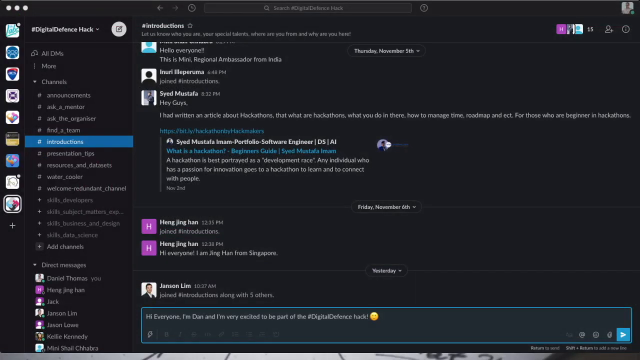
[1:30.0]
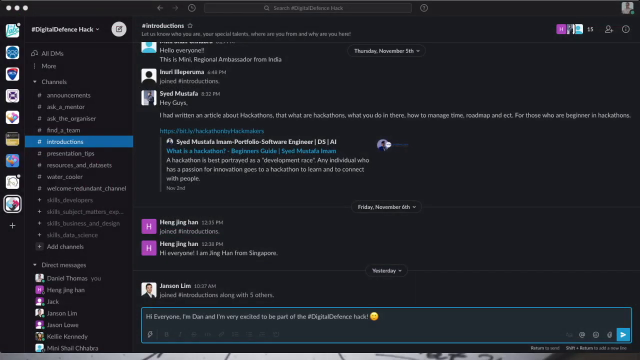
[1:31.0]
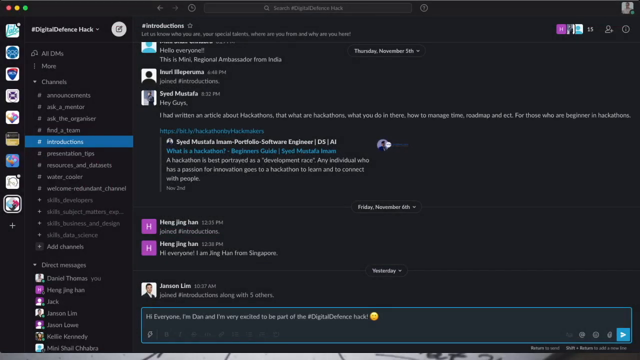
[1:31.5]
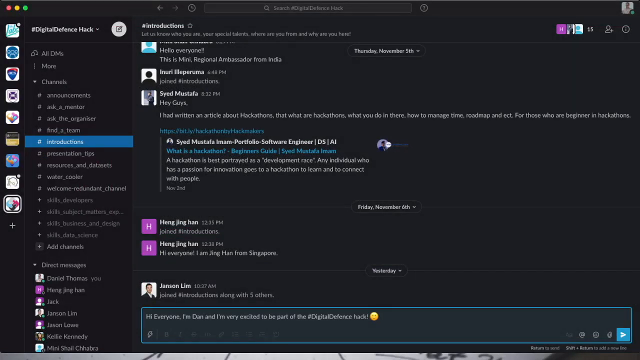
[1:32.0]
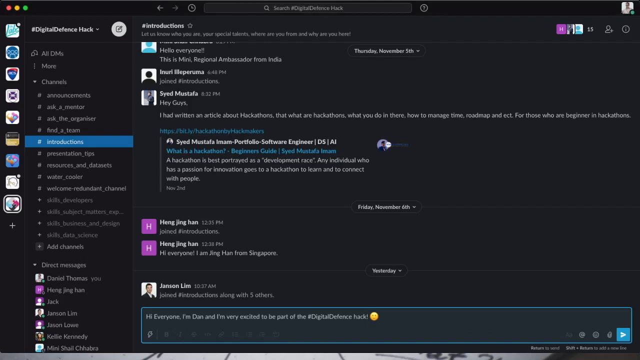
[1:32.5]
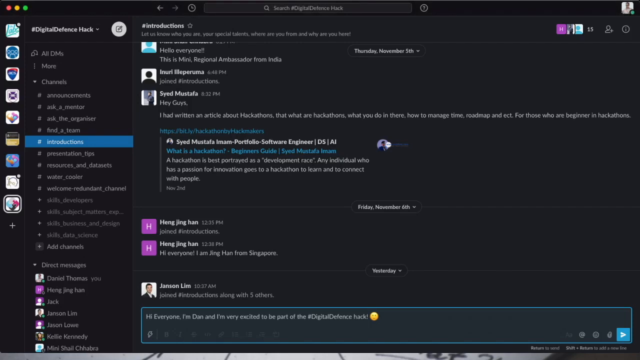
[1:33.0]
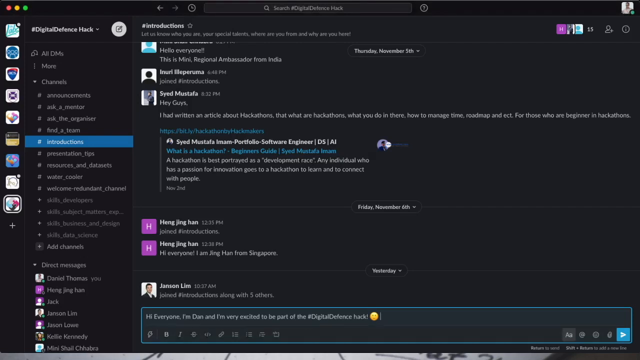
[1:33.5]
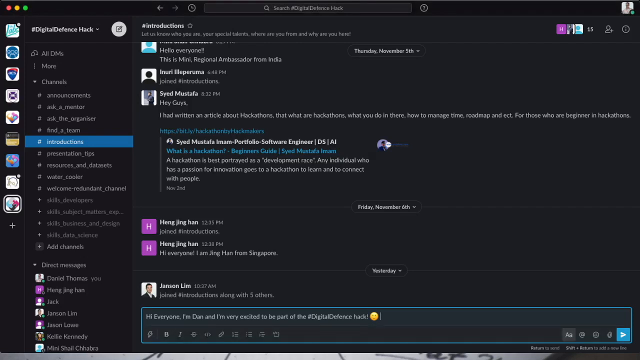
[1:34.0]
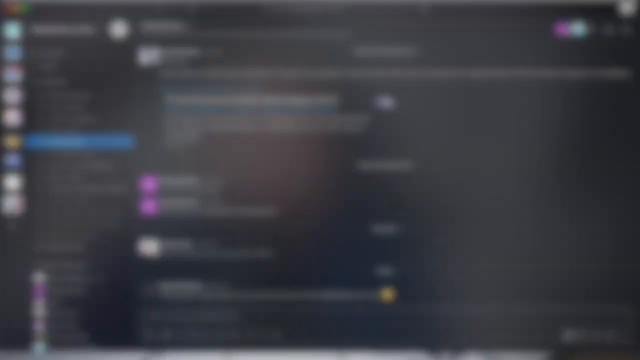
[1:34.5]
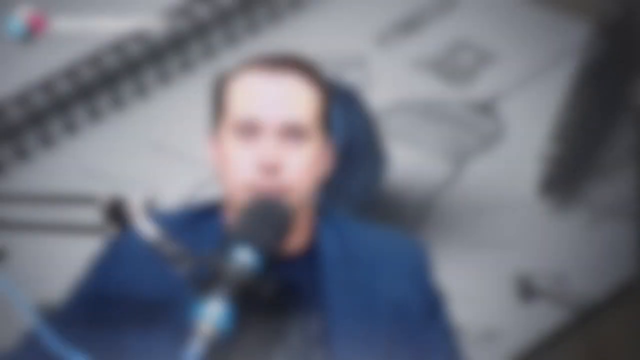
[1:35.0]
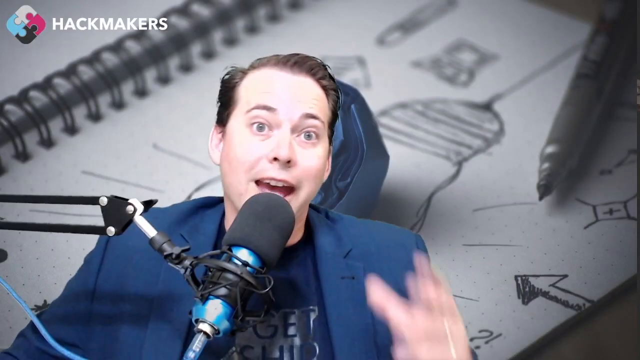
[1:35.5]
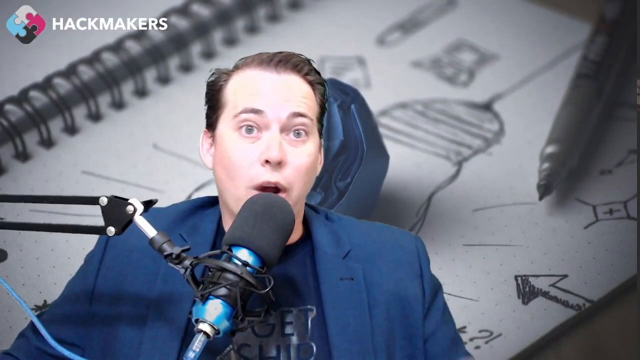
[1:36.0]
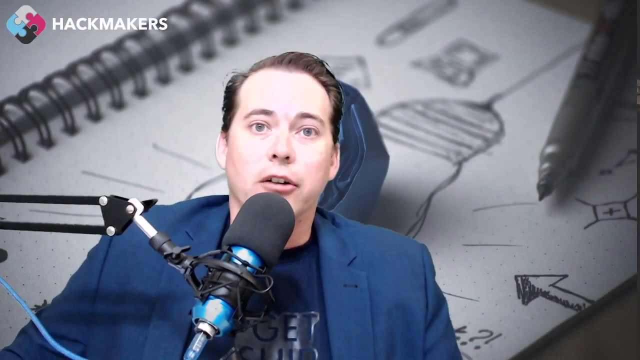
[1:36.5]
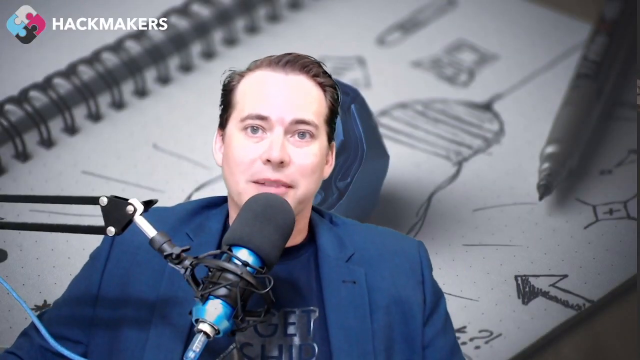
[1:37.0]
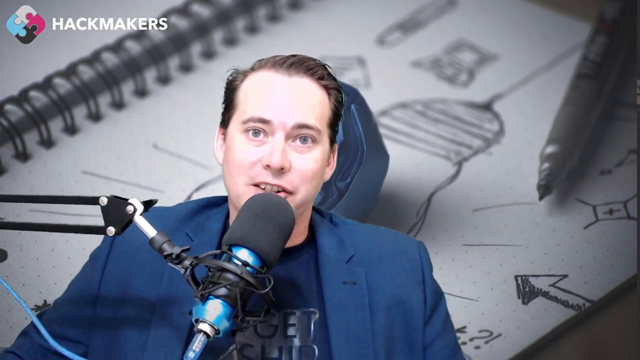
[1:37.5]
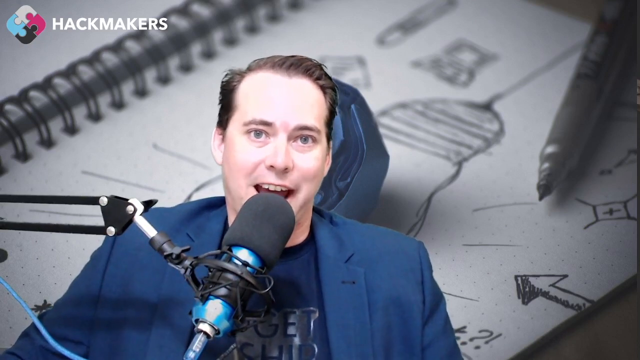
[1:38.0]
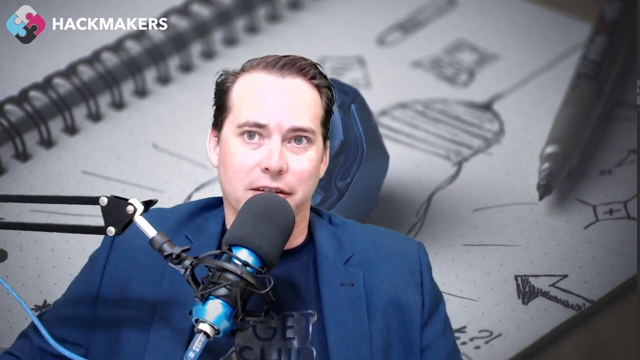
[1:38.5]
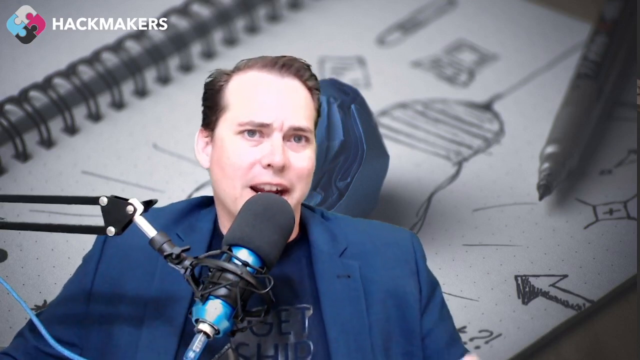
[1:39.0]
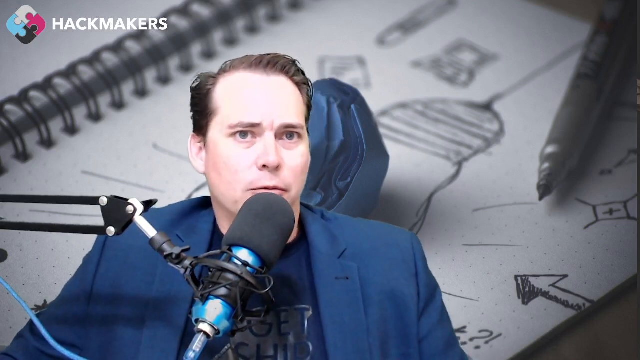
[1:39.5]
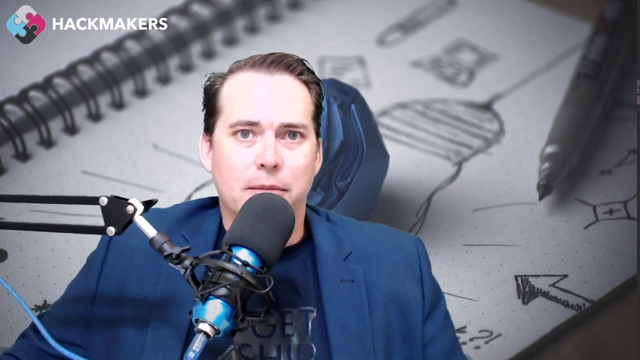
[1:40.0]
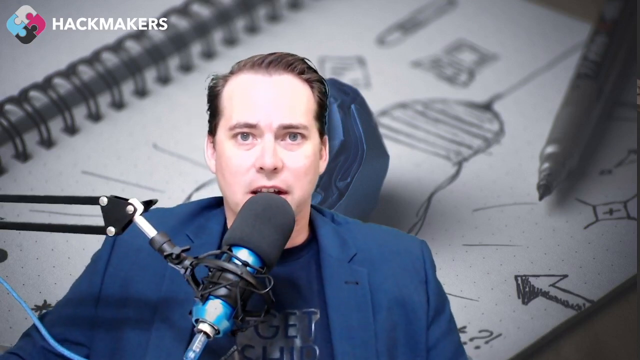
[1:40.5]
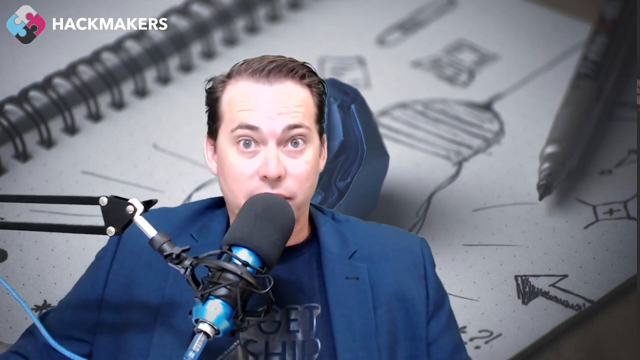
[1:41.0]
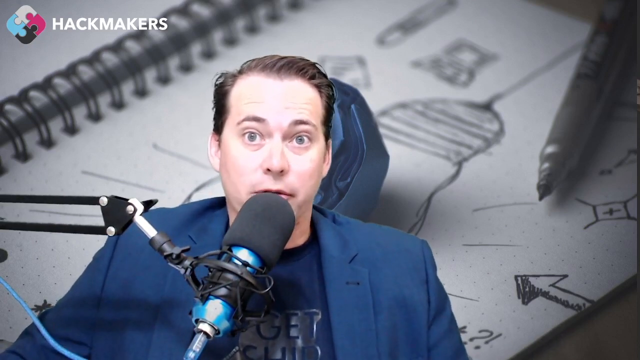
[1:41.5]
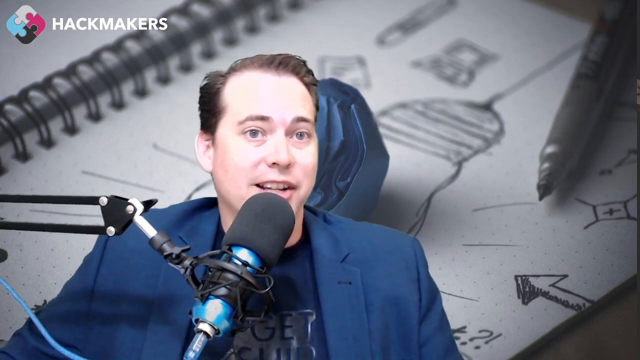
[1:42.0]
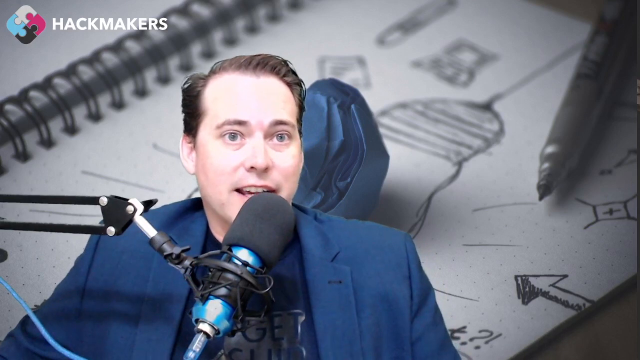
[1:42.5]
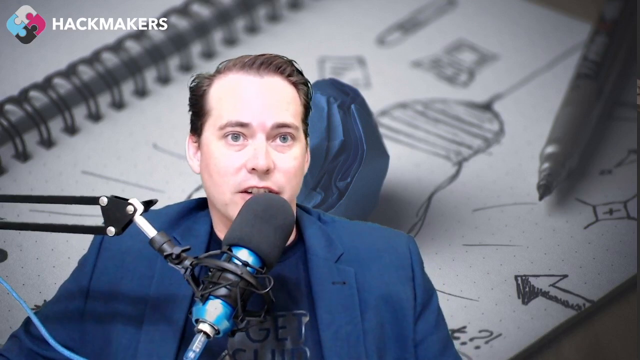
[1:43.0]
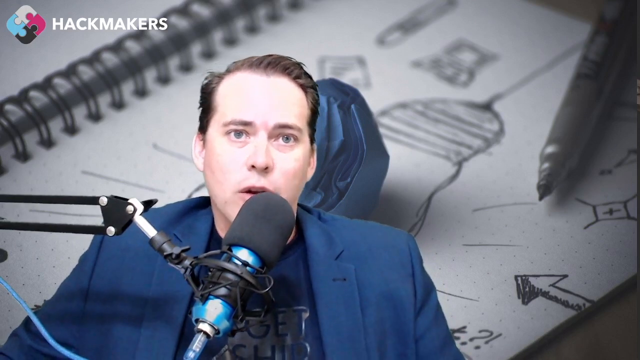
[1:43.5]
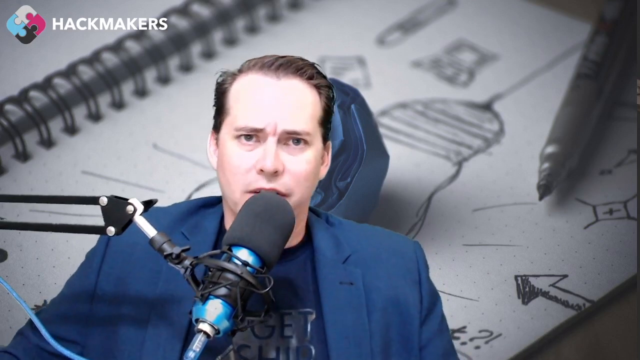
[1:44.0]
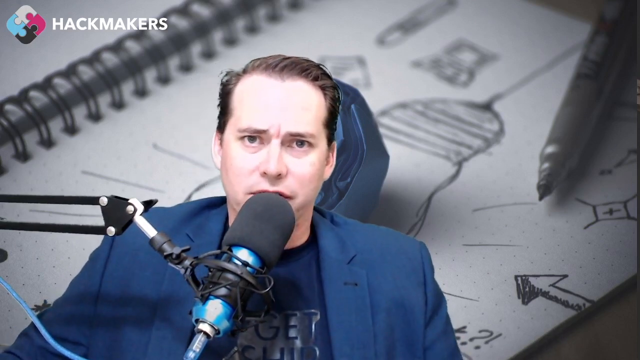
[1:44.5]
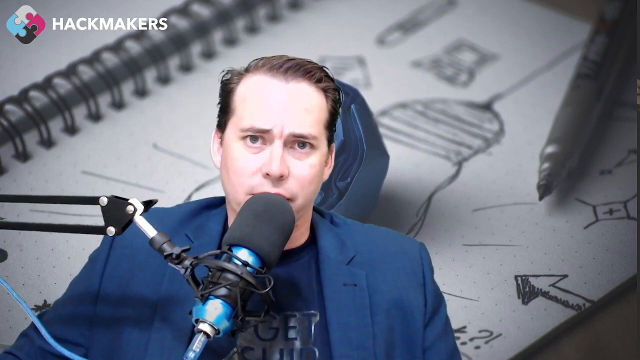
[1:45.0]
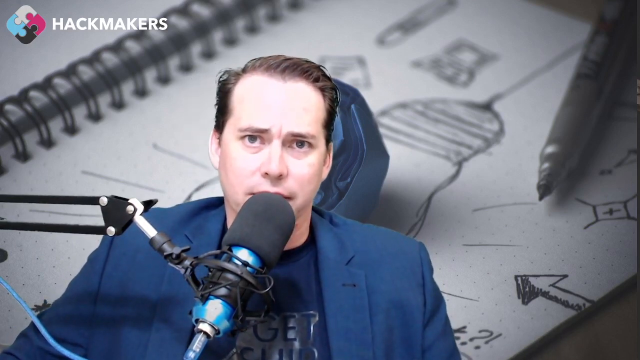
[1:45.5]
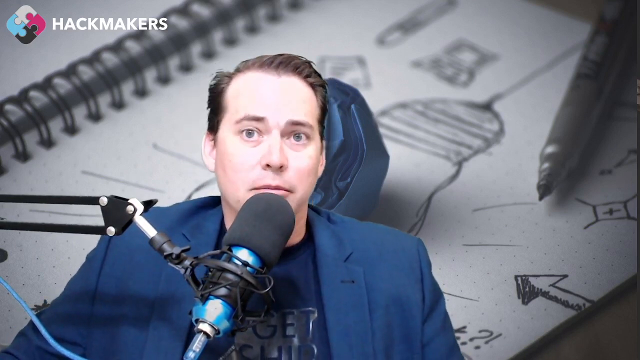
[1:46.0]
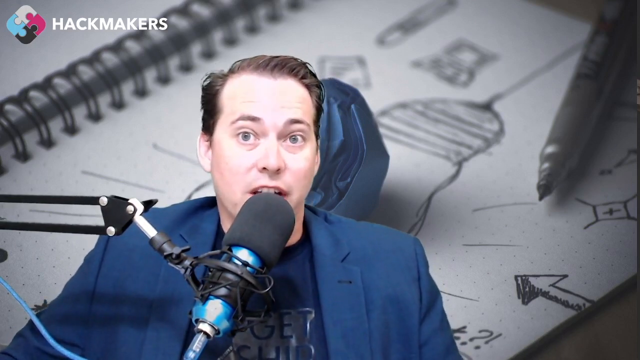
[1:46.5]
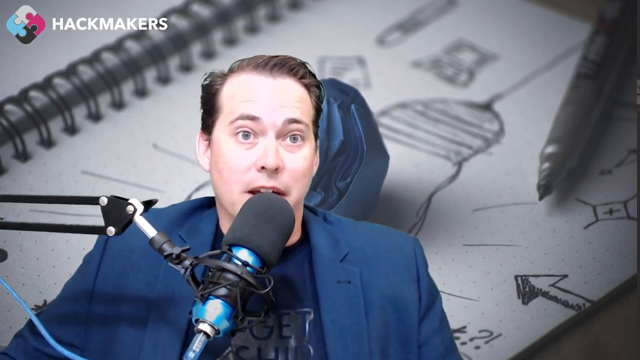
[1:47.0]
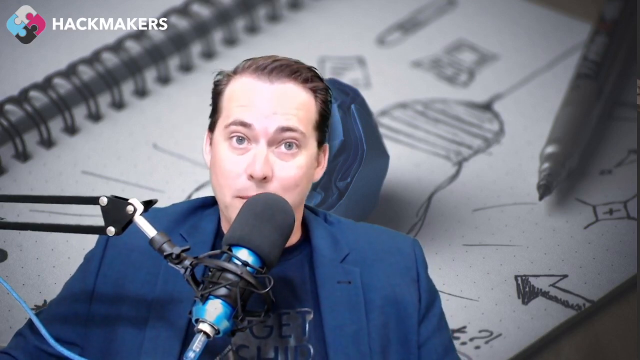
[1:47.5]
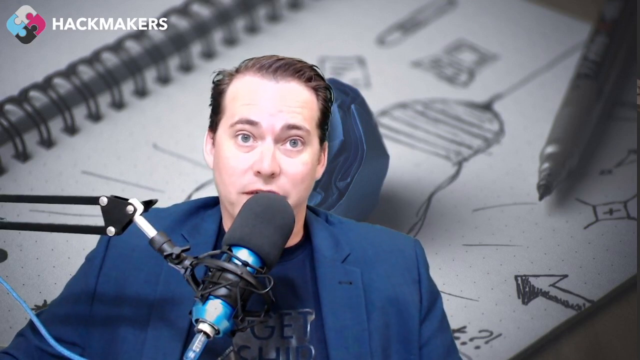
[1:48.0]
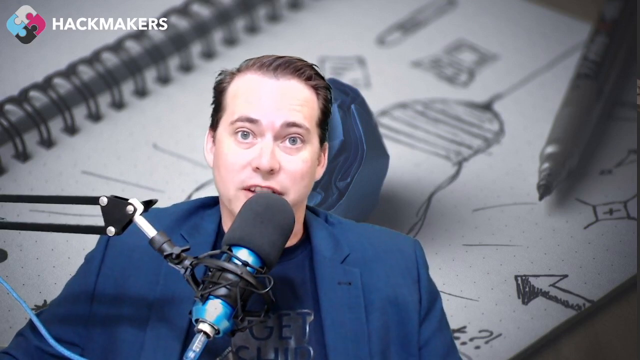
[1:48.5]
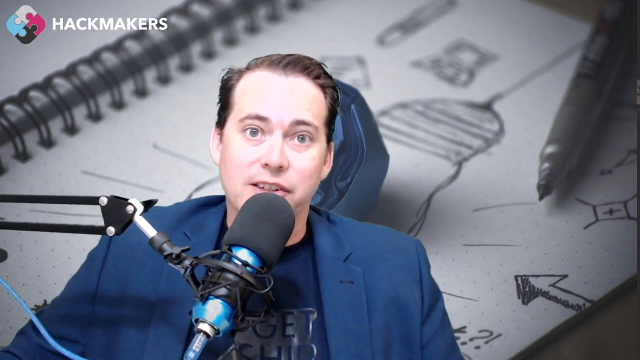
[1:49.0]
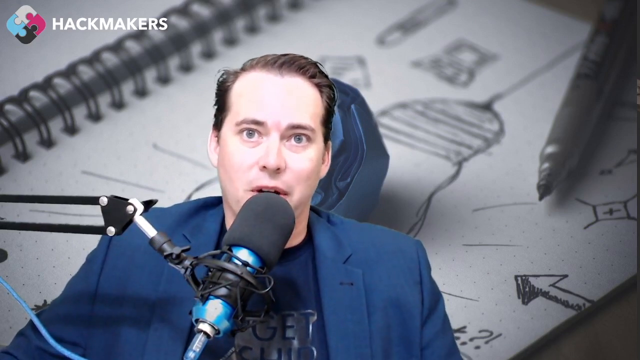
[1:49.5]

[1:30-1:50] A new page from the digital defense hack appears, with a side menu on the left. In the middle it reads "introduction," followed by comments from different people, such as one from Mustafa beginning "hi guys I had written an article about hackathon," with a link to the article, and other comments from different people on this hackathon blog. At the bottom is a section for writing a comment, where the user types "hi everyone I am Dan and I'm very excited to be put in the #digitaldefense" with a smiling emoji. At the top is a search button for finding relevant posts. The video then switches back to the person in the podcast, who talks while still gesturing with his left hand.